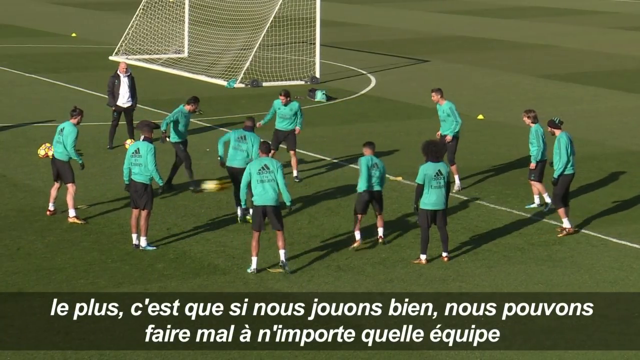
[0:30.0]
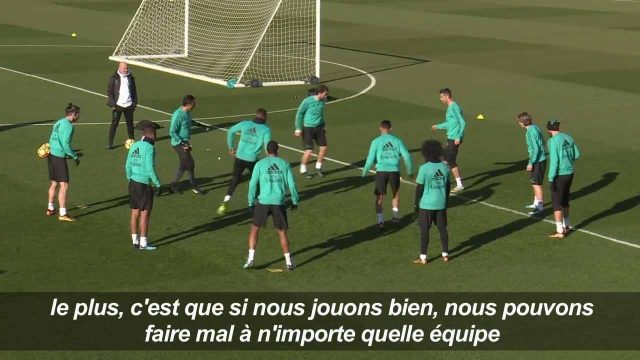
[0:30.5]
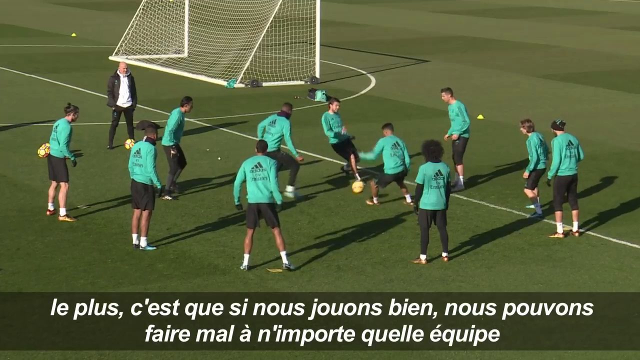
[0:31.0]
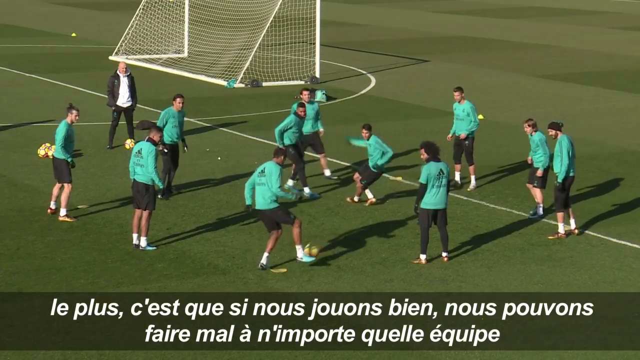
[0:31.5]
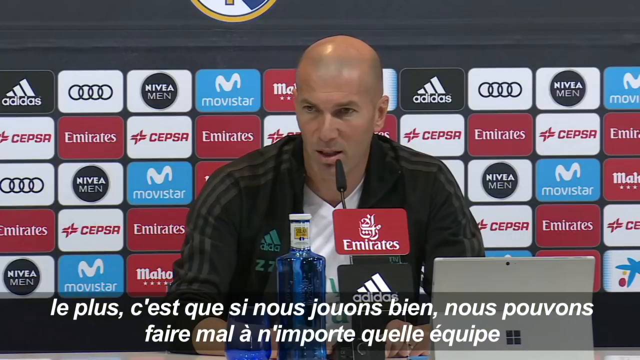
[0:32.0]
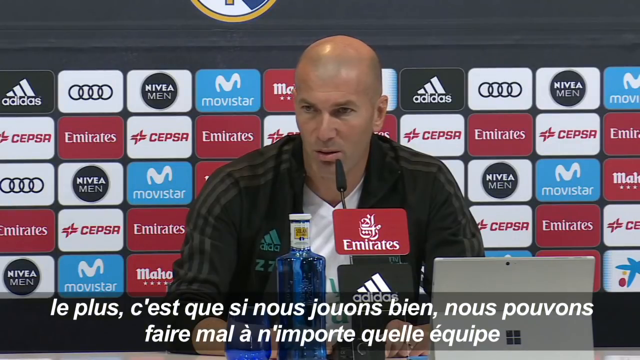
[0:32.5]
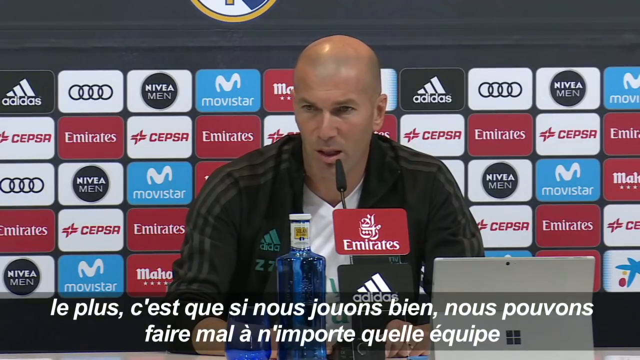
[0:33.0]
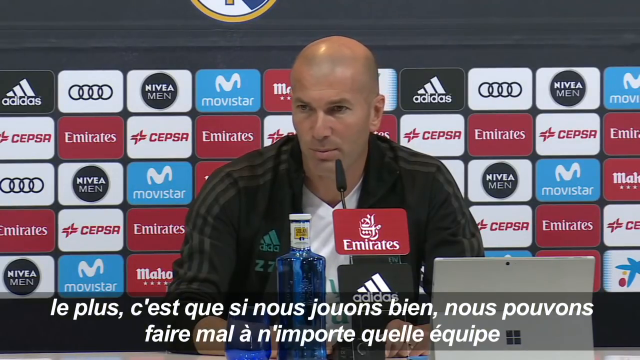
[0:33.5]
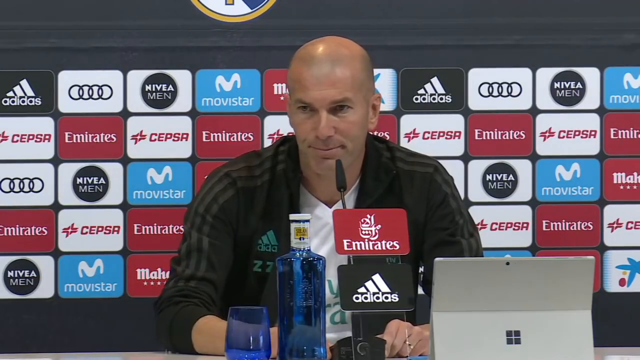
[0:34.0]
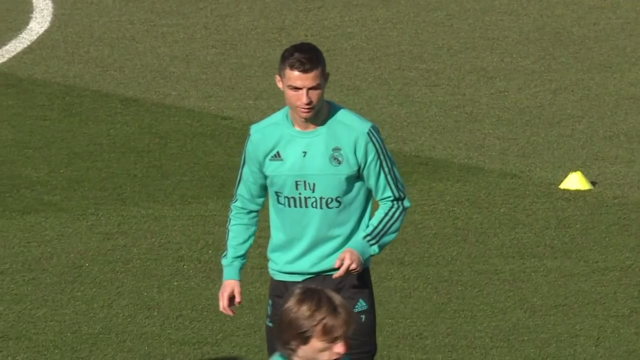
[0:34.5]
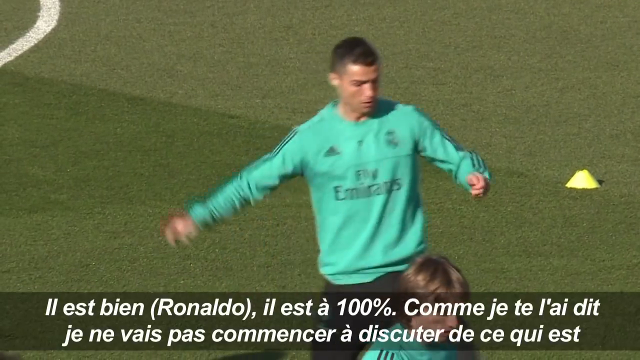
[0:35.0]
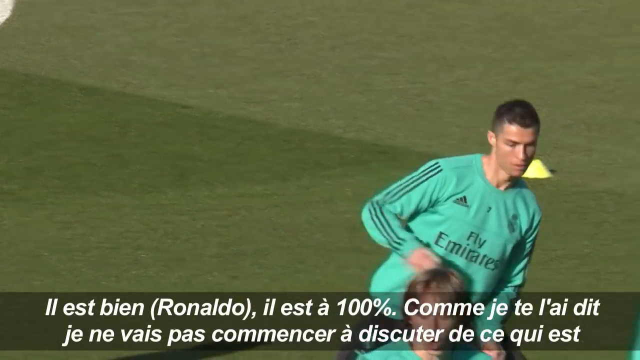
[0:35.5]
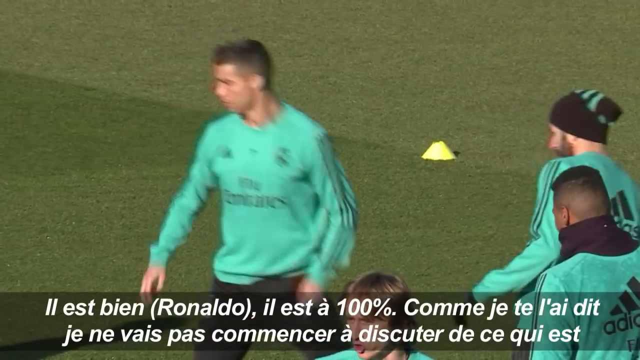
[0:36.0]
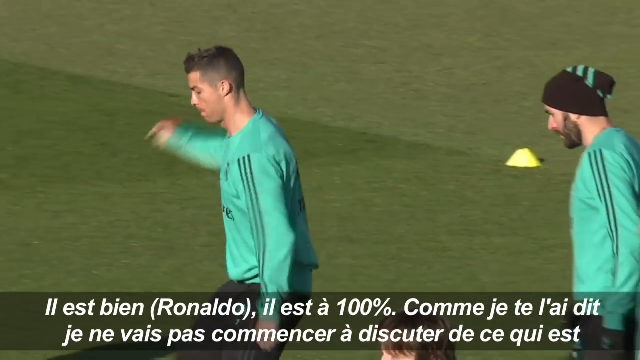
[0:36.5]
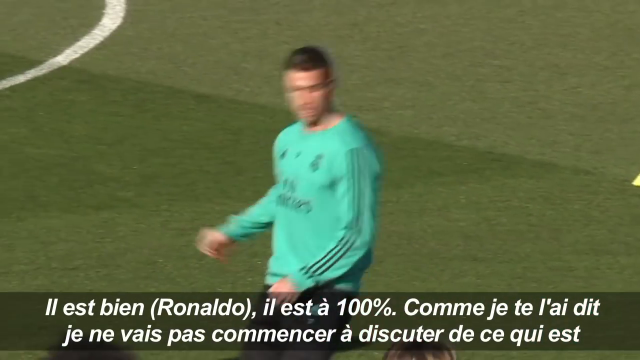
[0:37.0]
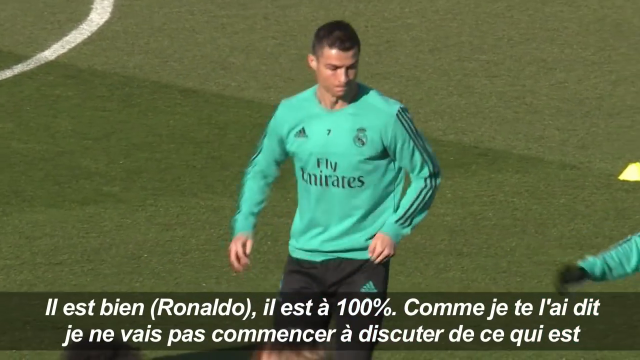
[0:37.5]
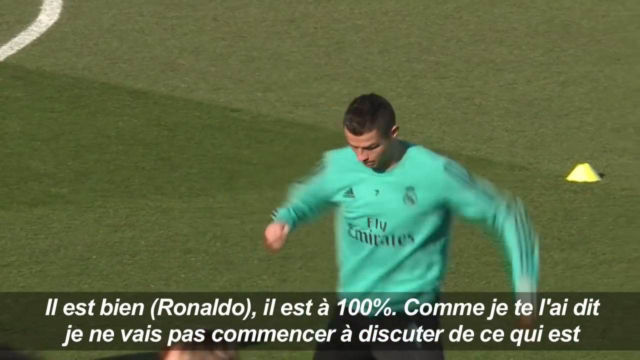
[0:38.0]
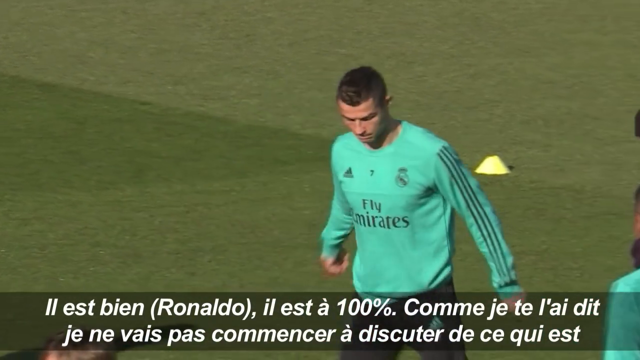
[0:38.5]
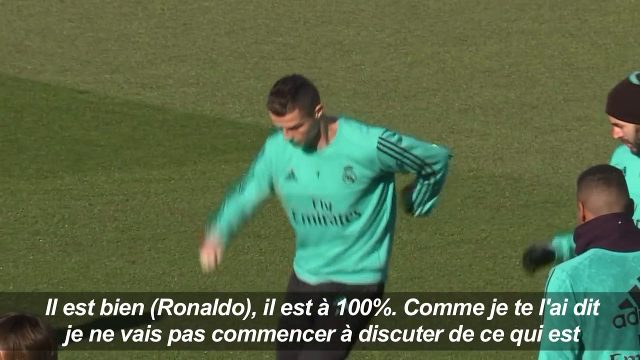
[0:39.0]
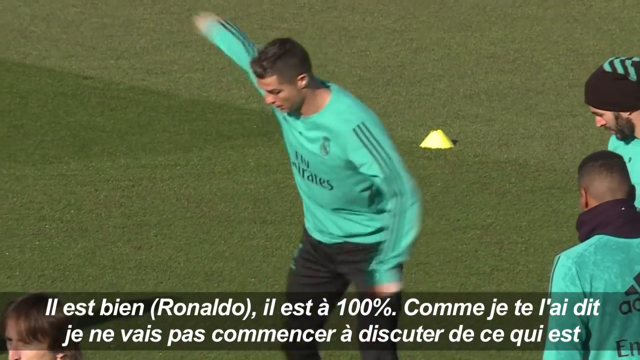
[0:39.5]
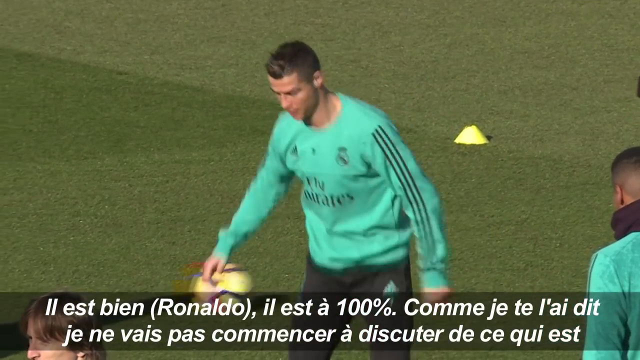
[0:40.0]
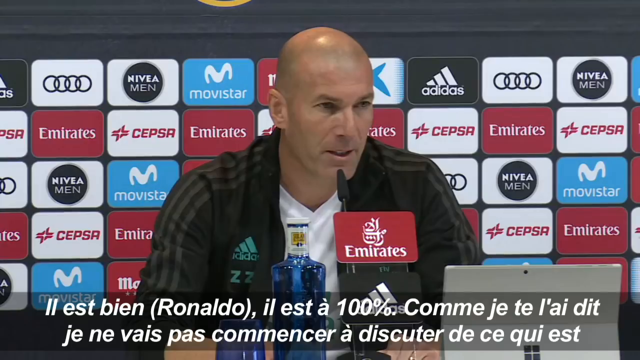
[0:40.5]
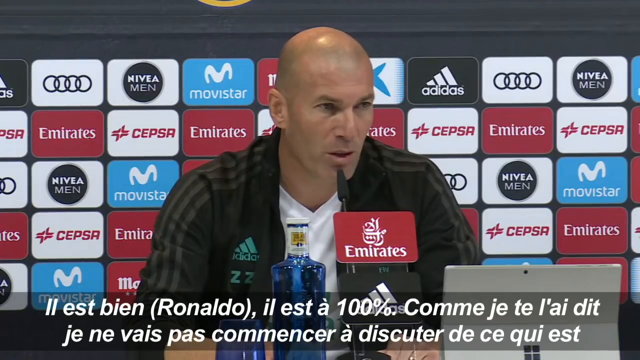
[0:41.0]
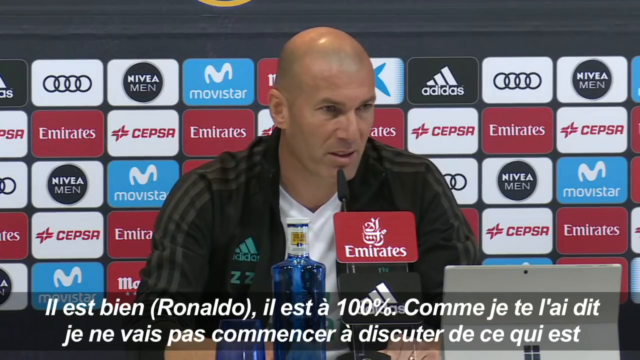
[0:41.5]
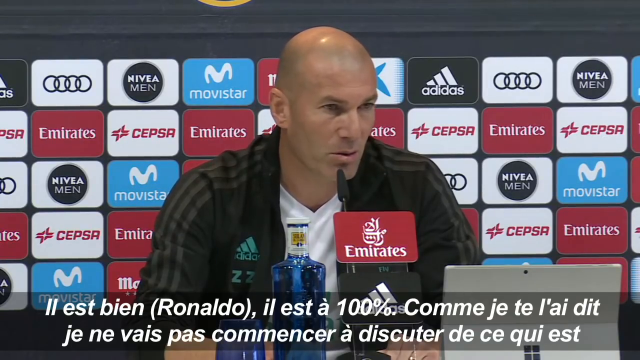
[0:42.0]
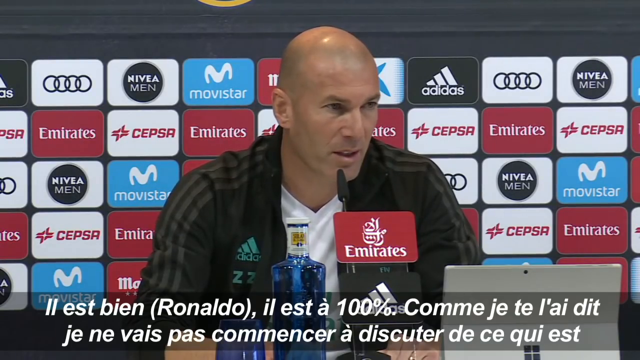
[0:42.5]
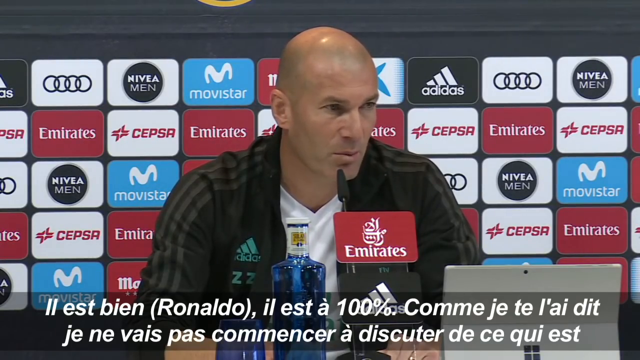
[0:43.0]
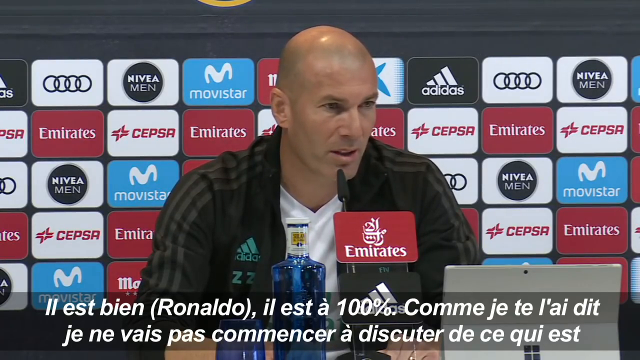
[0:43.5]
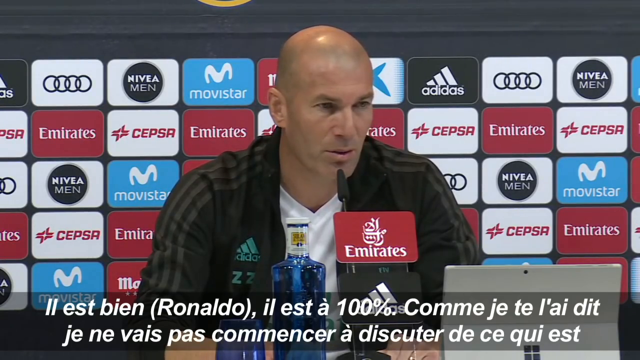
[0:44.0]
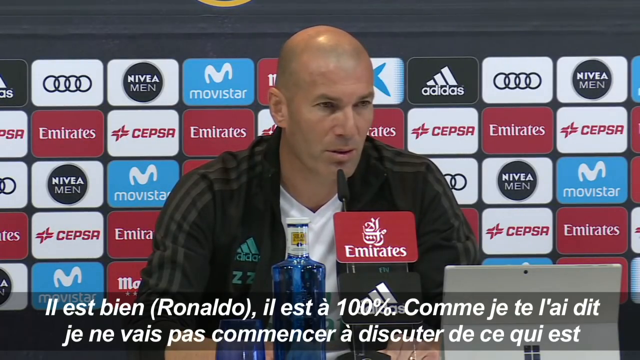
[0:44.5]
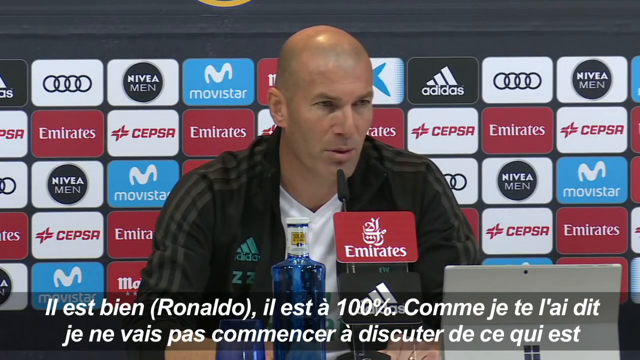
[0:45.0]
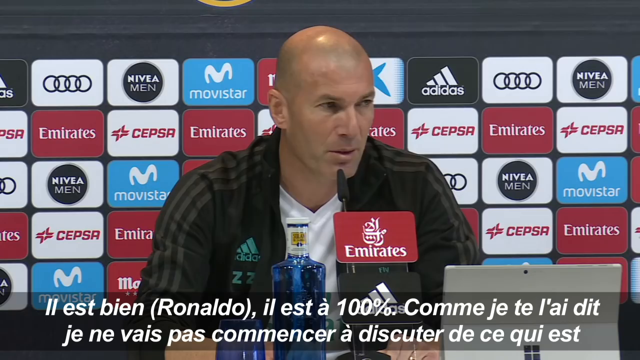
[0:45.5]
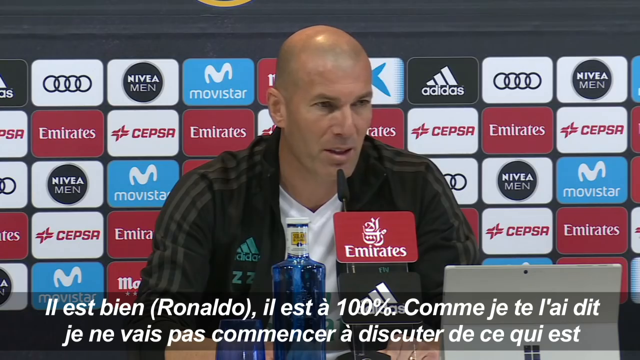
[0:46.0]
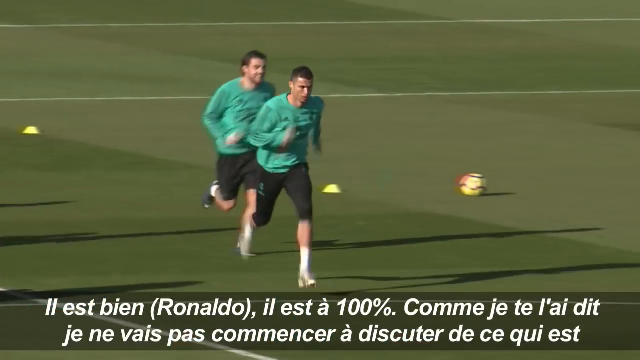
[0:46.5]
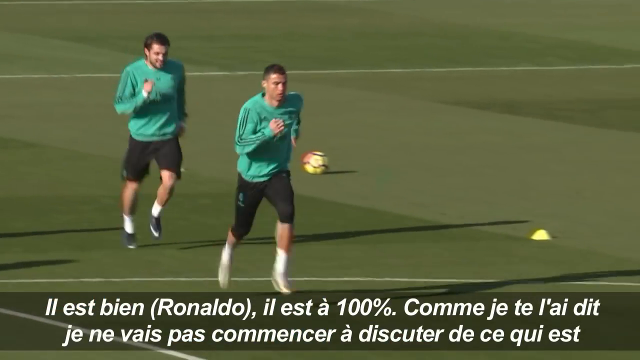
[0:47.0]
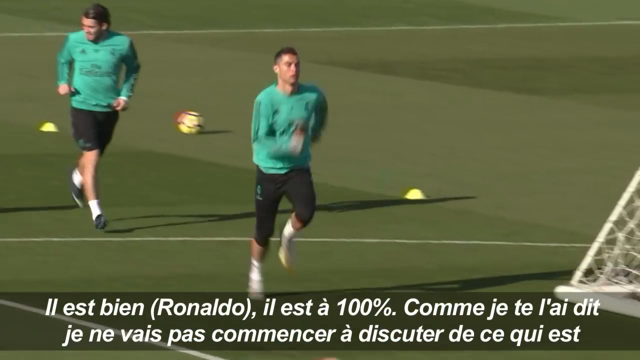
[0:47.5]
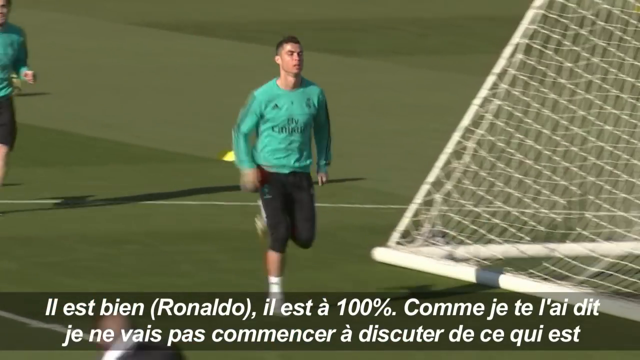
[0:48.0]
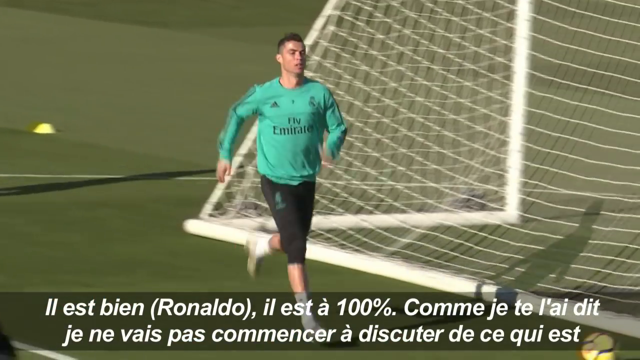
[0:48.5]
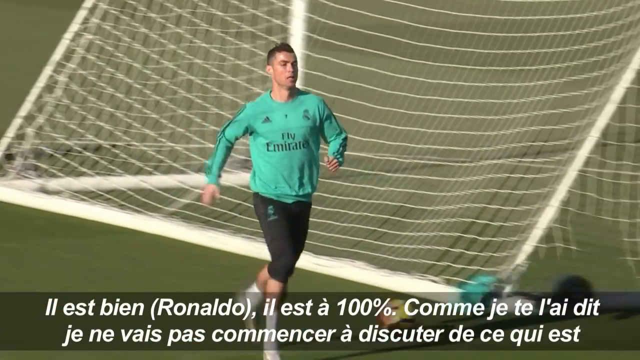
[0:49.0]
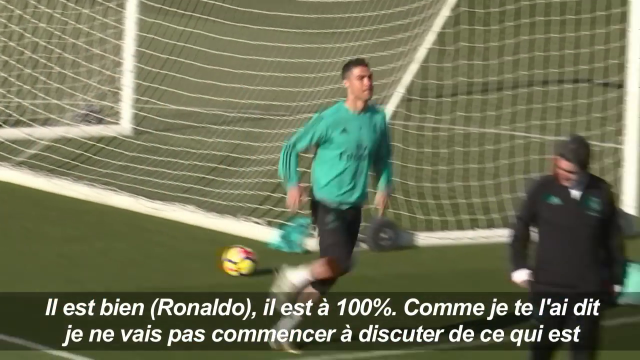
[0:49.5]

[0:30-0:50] Professional soccer players practice, each wearing a long-sleeve light green top; some wear shorts and some wear long pants. They kick the ball around, and the back of a shirt says "Adidas". The scene changes to a press conference with what looks to be their coach, a bald man in his mid to late 40s wearing a black jacket with an Adidas emblem. Behind him are many different advertisements, including Audi, Adidas, Emirates and Movie Star. His microphone has a red Emirates sign with white lettering underneath it, and below that a black sign with white lettering reading Adidas.